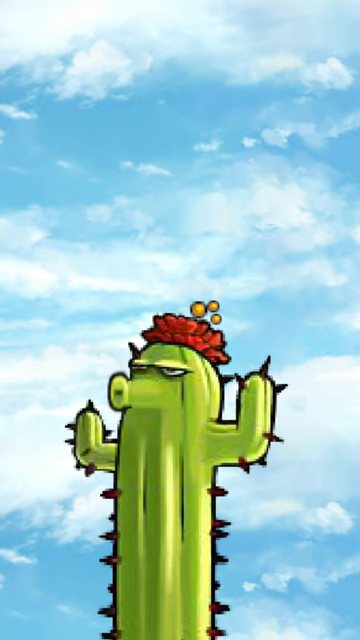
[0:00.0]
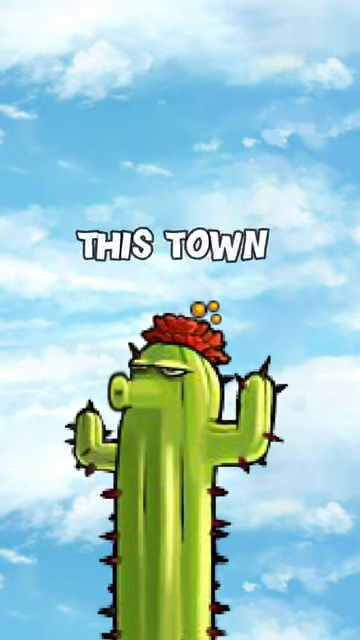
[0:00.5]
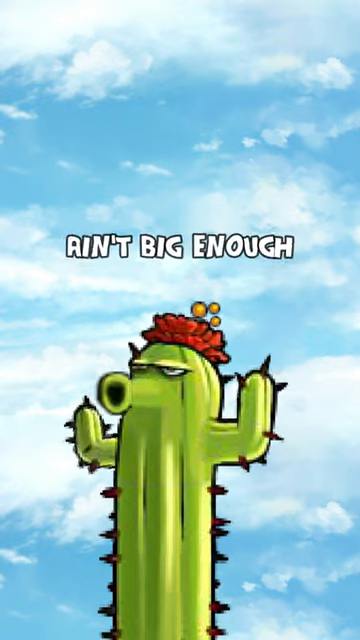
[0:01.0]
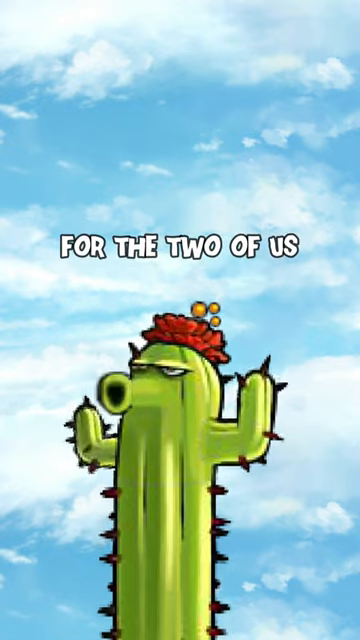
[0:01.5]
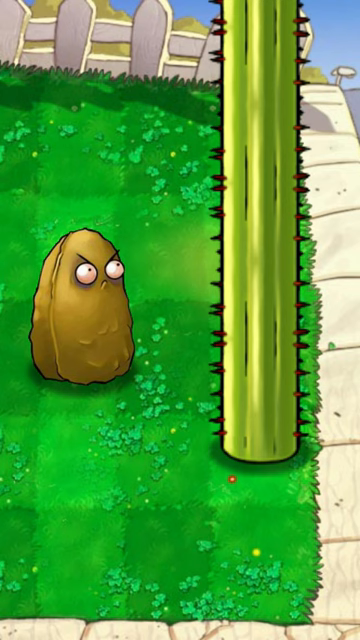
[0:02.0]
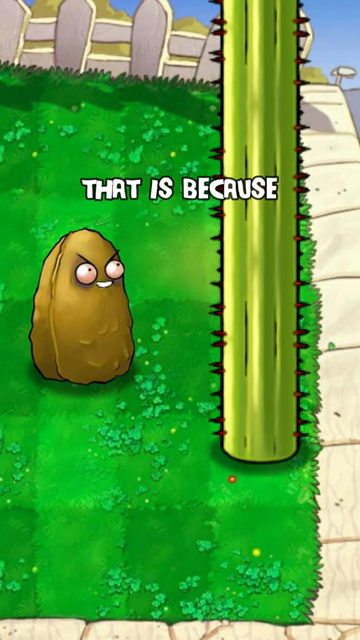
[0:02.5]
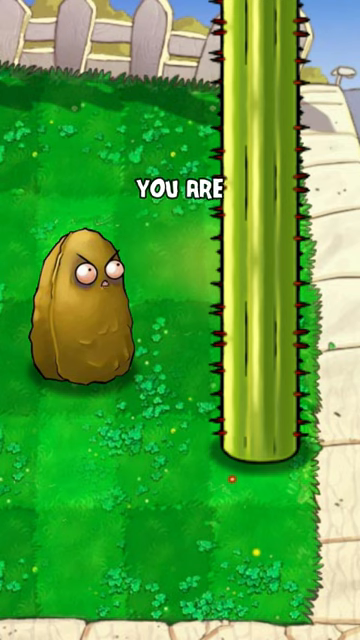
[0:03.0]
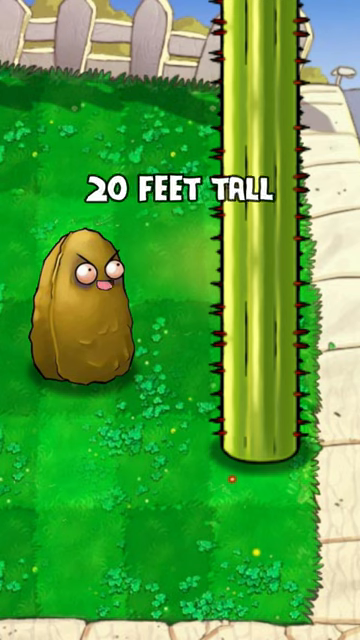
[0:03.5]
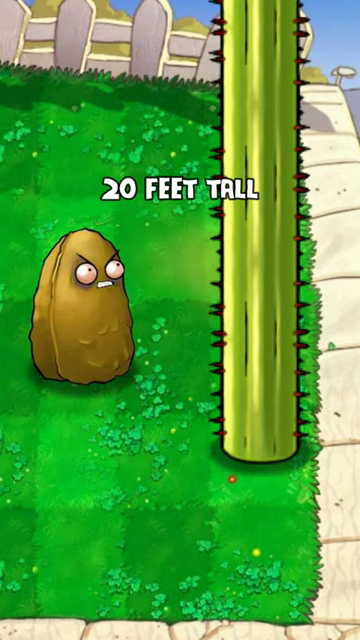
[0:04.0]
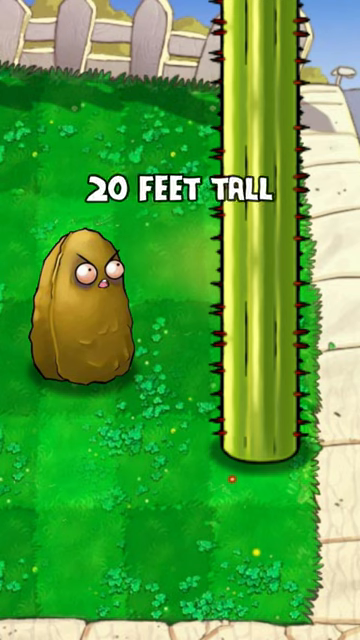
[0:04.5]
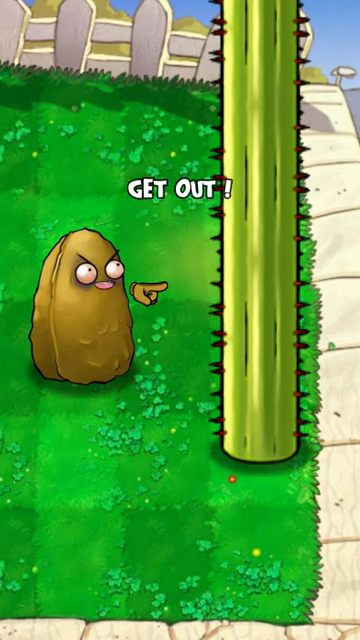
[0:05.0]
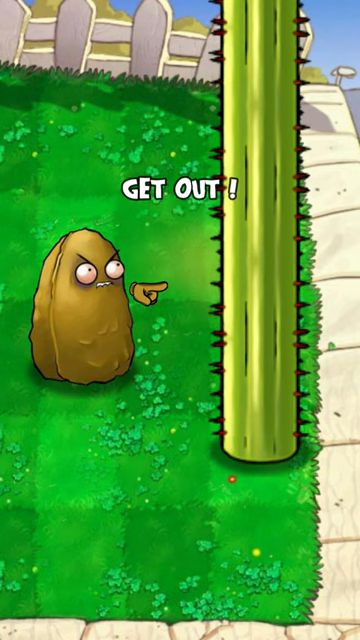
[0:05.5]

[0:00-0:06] In a cartoon-style animation, what appears to be a cactus stands beside a character on the left whose identity is unclear; it looks like a rock. Both characters are exaggerated and have facial expressions. The cactus seems to be bragging to the apparent rock character about how tall he is growing, while the rock character, judging by his facial expressions, seems to be threatening him, as if telling him he can't do that. The cactus grows continuously, already tall and apparently trying to reach 20 feet, exaggerating more and more. The rock has a hand that appears only on its right-hand side, and he points at the cactus, seemingly telling him he is obnoxious and should stop, but the cactus does not. The setting looks suburban, with a white fence behind them and a sidewalk on the right-hand side next to the growing cactus.